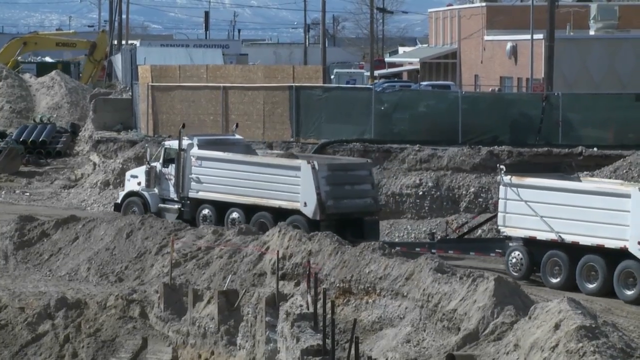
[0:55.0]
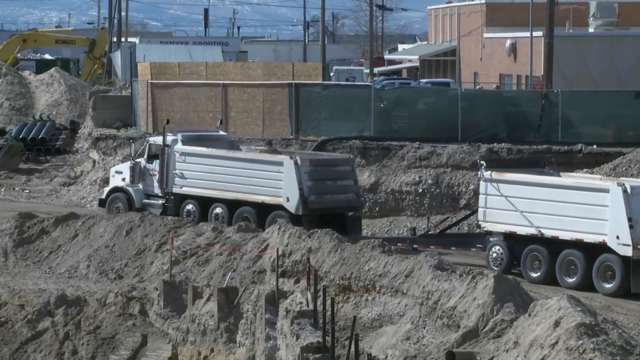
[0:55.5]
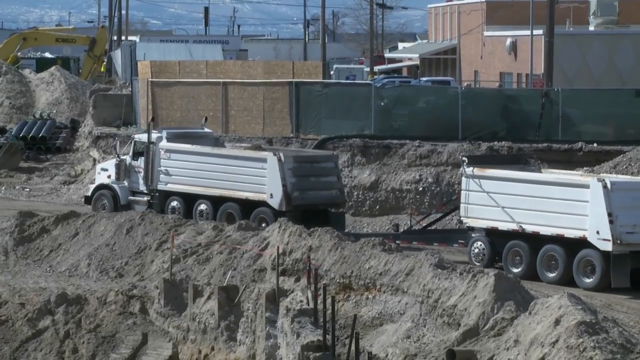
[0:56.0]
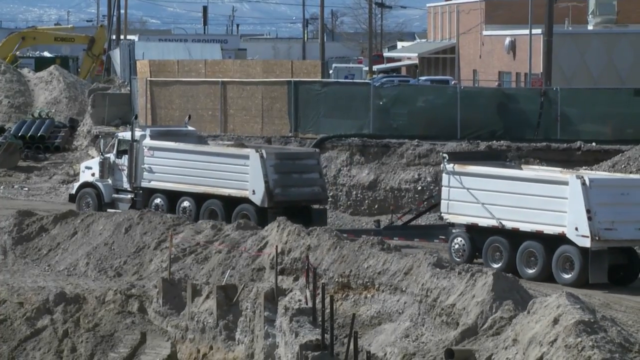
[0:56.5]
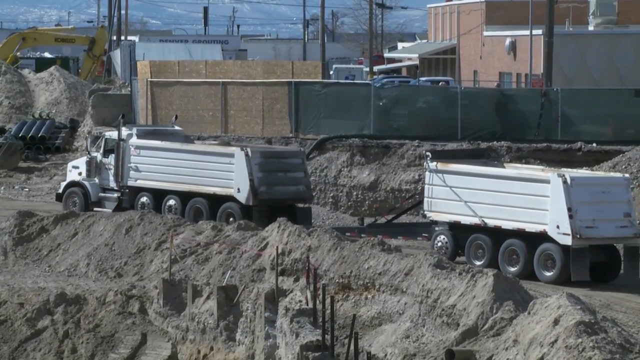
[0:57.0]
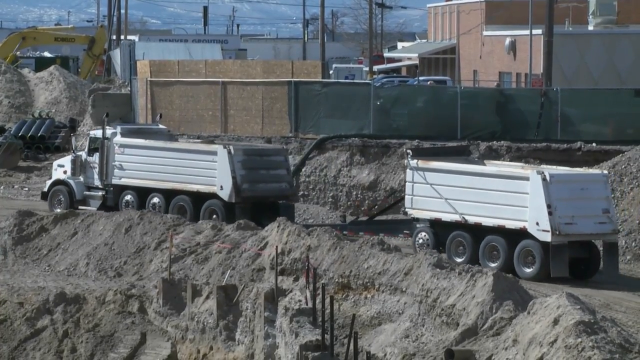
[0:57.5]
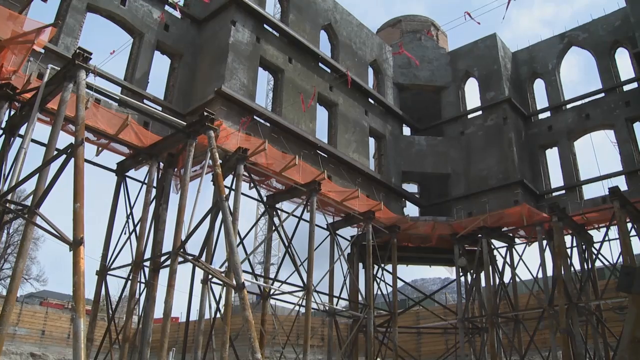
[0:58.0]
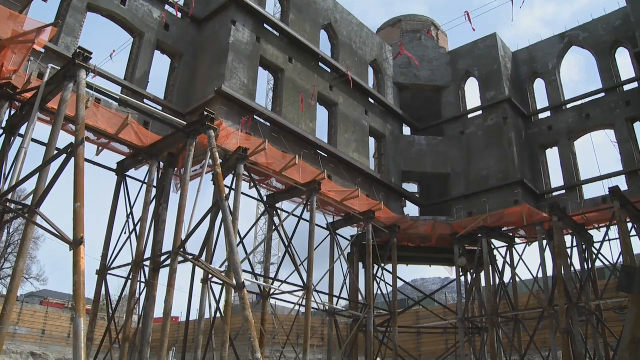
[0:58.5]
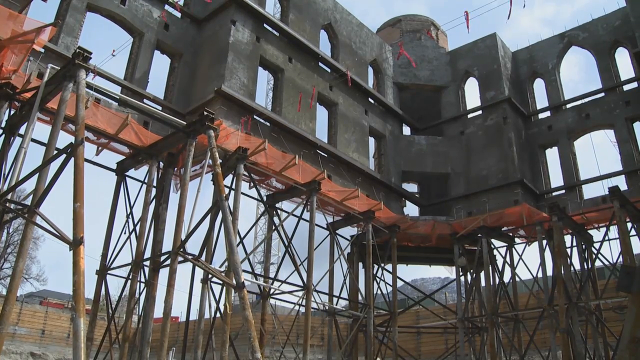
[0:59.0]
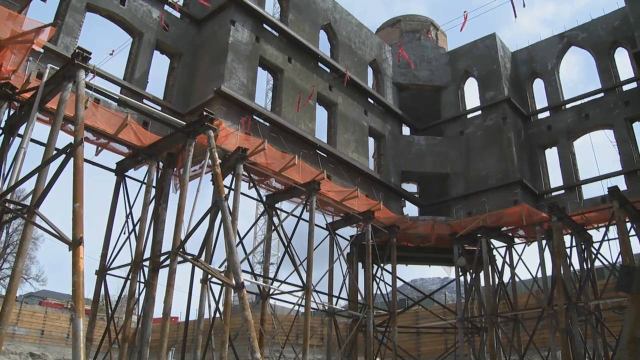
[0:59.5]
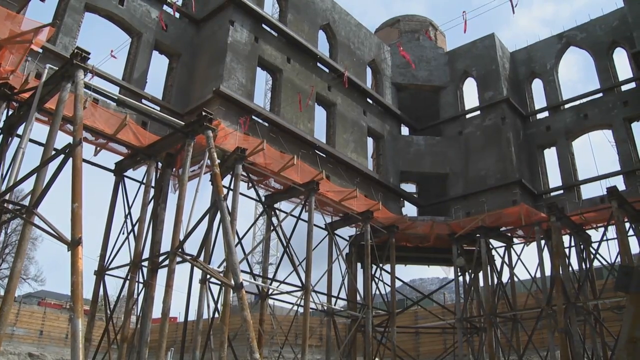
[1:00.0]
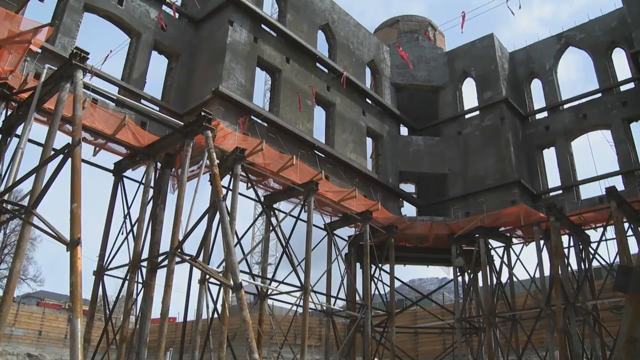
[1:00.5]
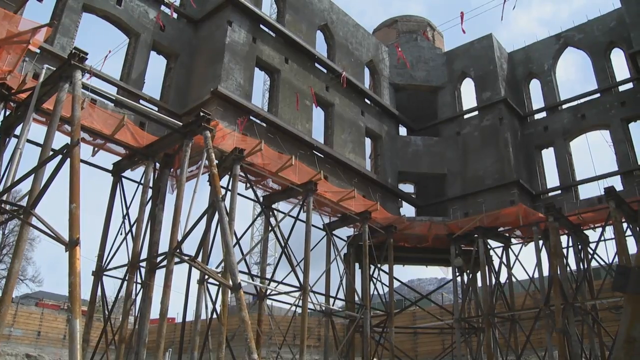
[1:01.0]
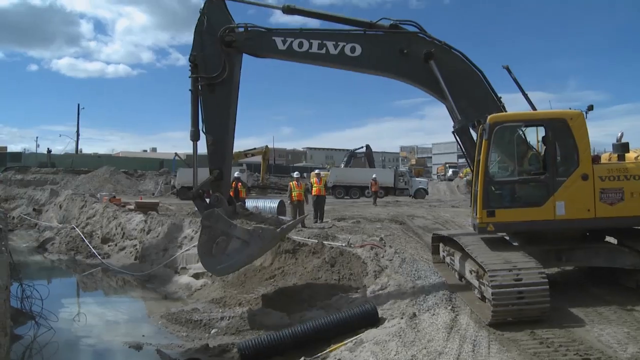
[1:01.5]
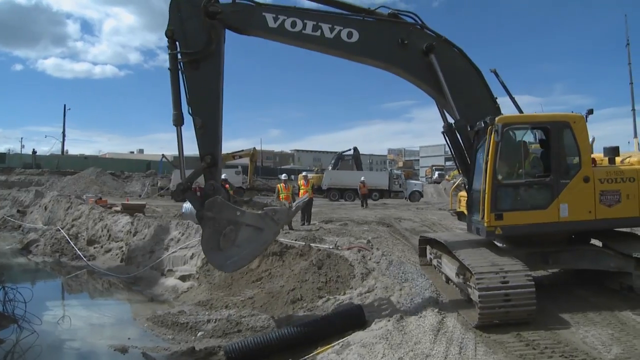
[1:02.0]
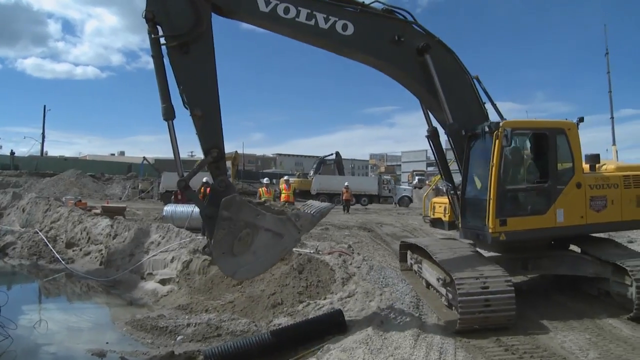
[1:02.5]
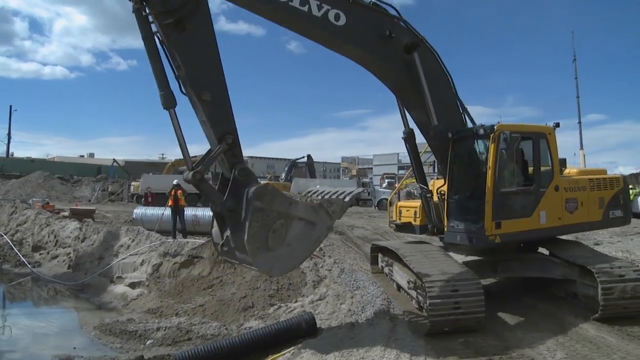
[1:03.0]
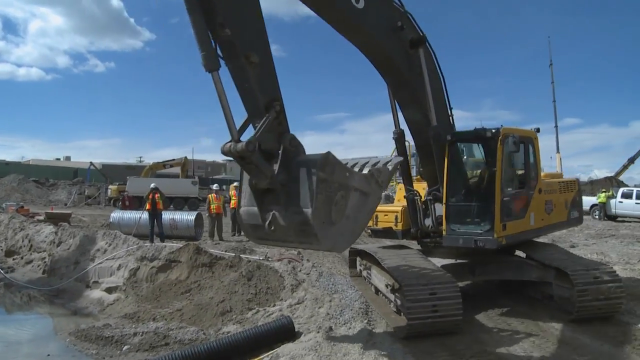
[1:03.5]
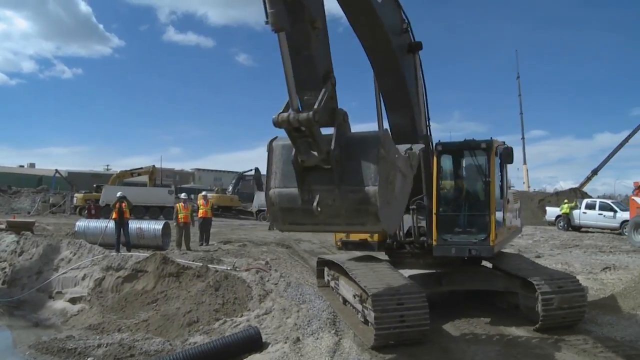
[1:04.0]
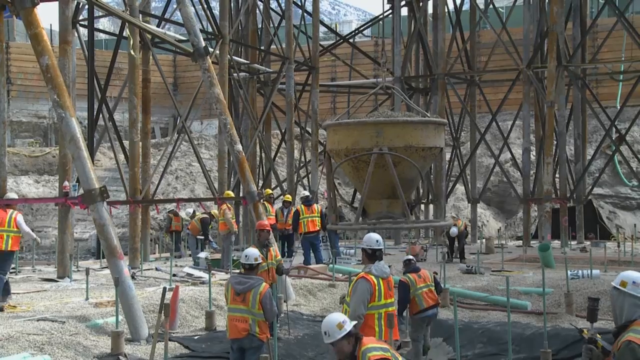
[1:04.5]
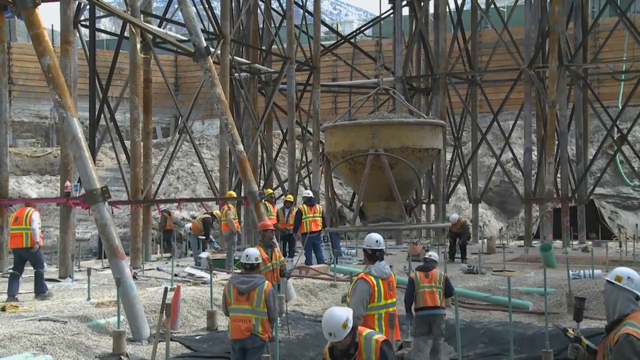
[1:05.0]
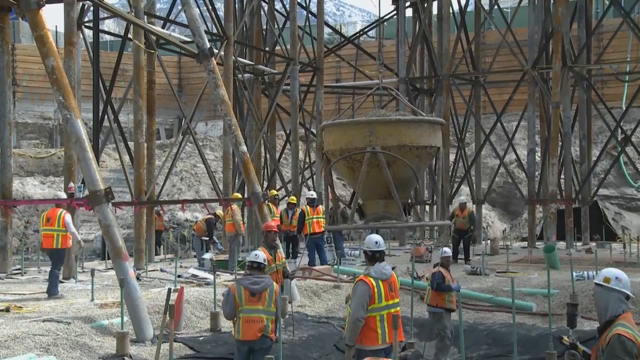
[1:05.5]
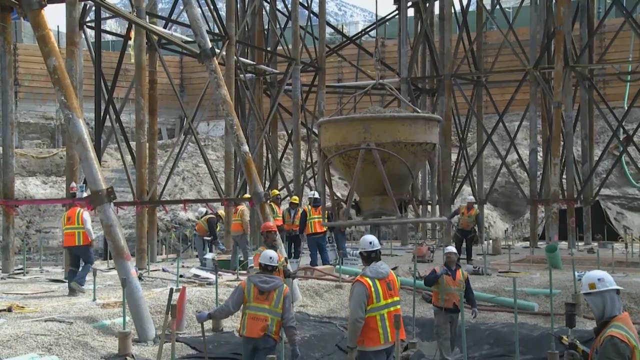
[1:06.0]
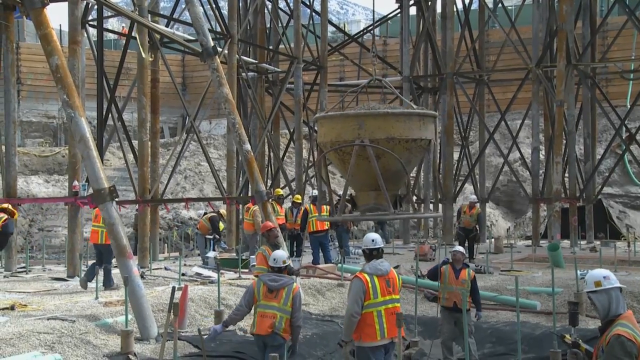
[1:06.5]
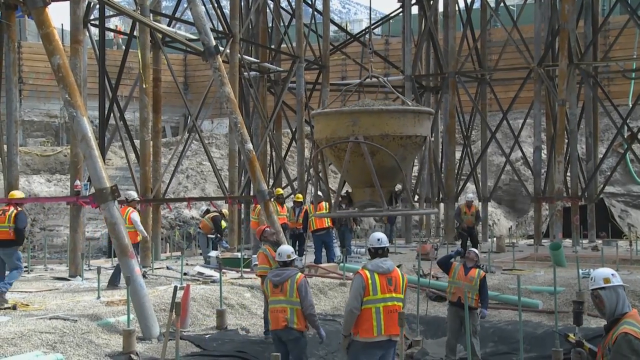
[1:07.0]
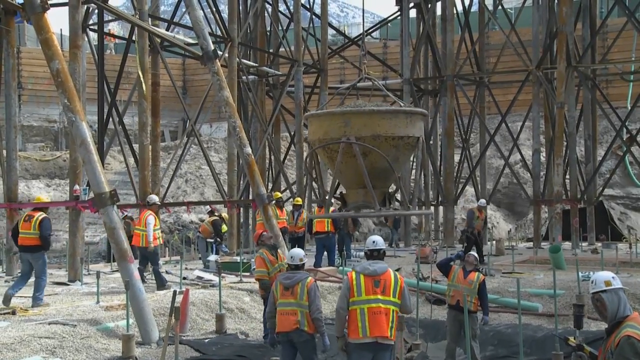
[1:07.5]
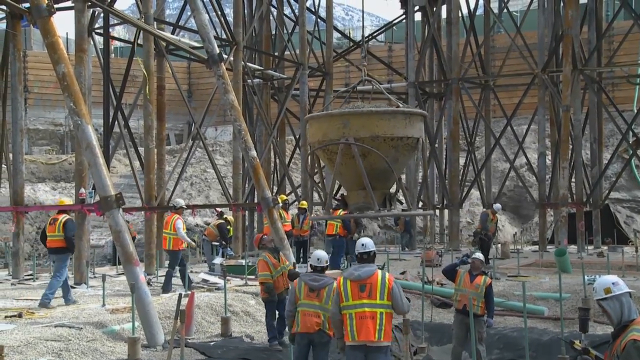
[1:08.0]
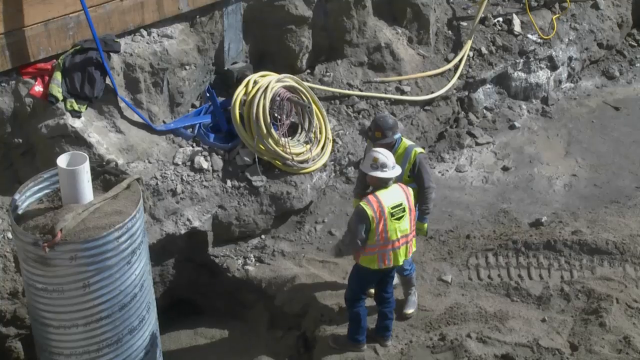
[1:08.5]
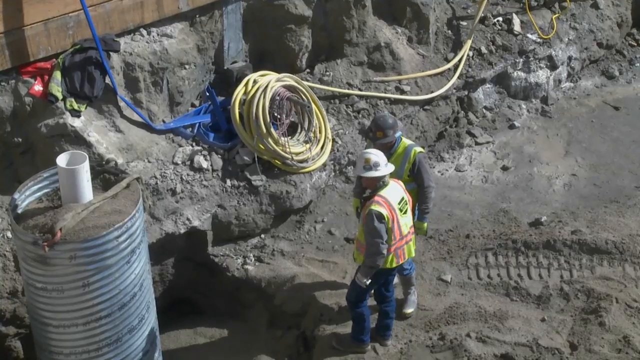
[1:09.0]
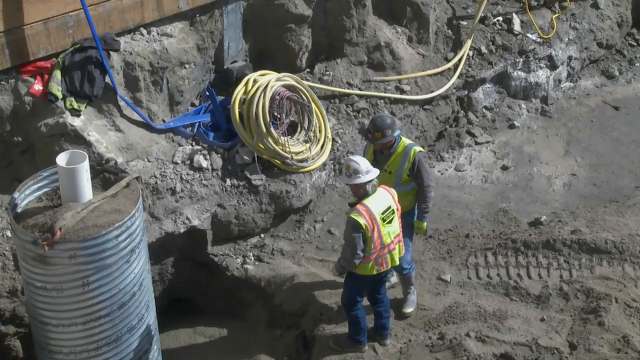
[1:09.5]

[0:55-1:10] A truck carries another little truck inside the church. A Volvo digger moves around, digging dirt and moving it around. A group of construction workers is inside, and a couple of construction workers are outside. There are many more people now, hard to count, probably about 15. Some sort of device is lifted up while construction workers in yellow and orange vests and white hats work, moving dirt and digging.